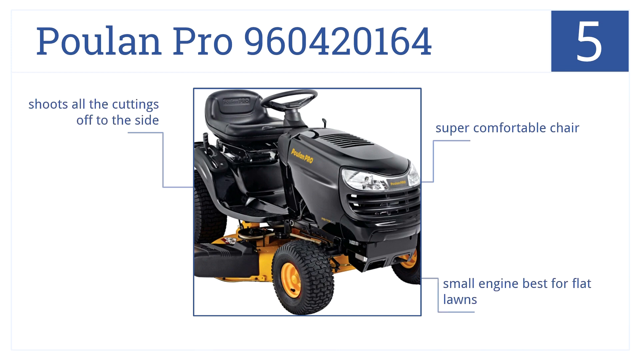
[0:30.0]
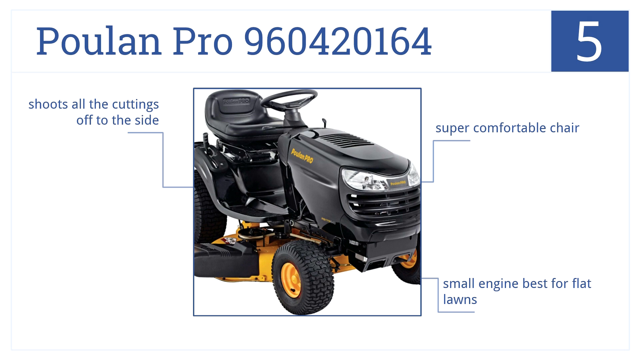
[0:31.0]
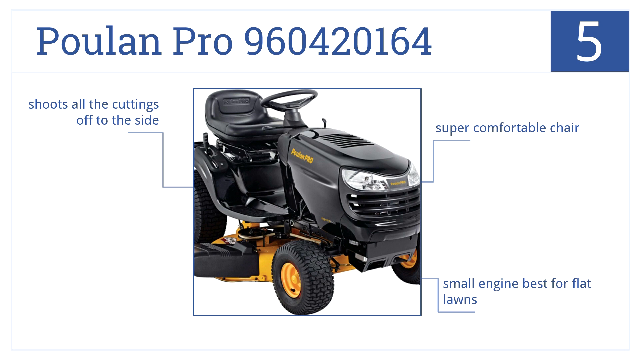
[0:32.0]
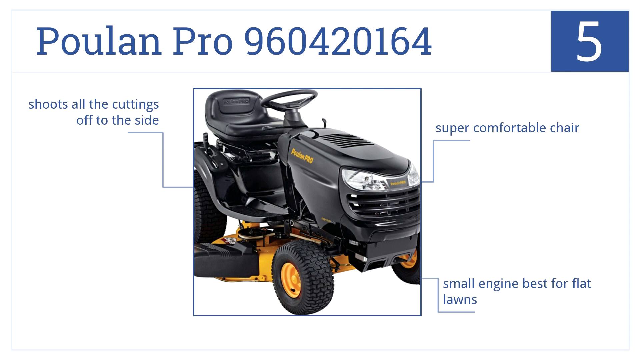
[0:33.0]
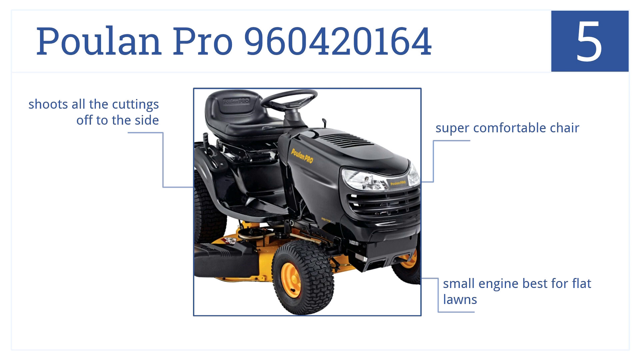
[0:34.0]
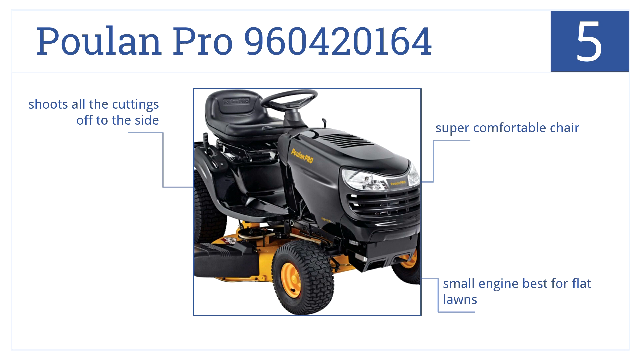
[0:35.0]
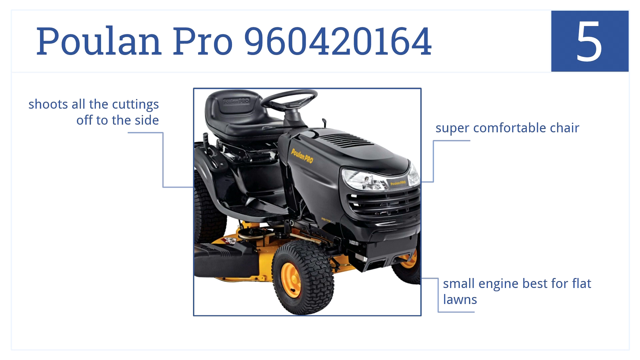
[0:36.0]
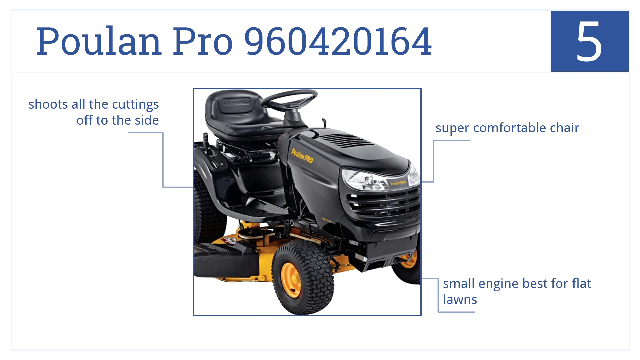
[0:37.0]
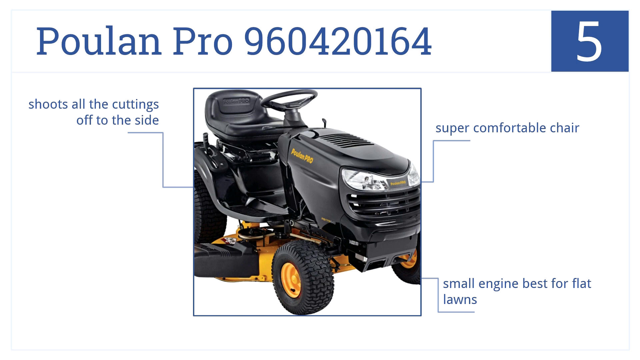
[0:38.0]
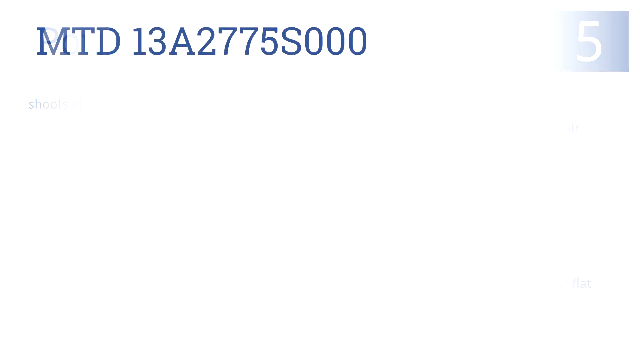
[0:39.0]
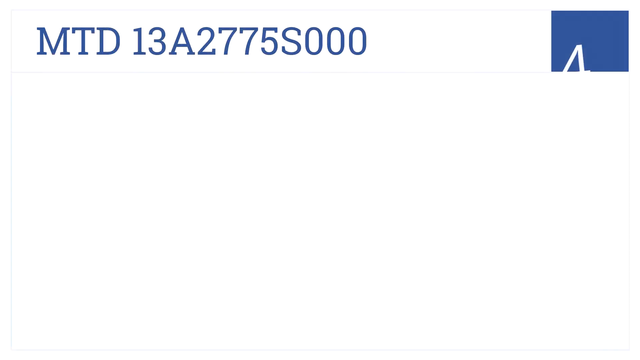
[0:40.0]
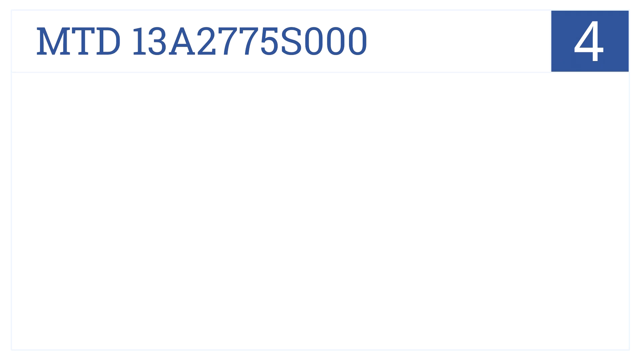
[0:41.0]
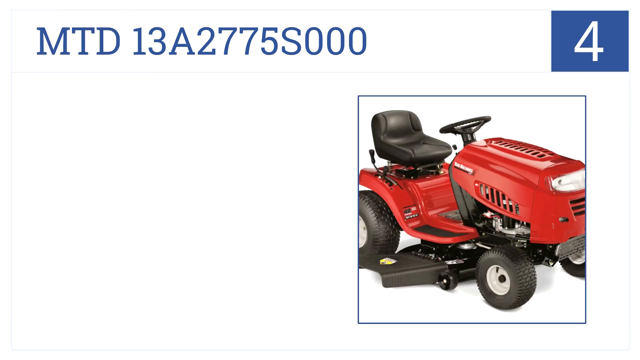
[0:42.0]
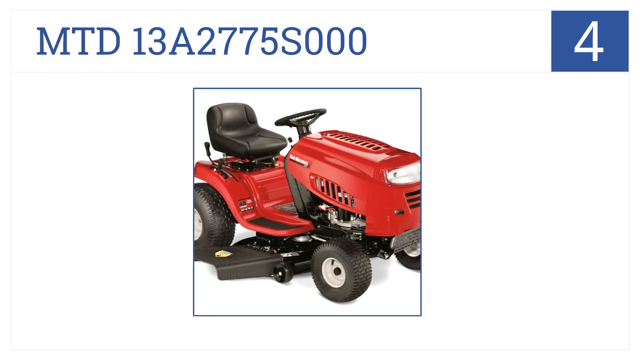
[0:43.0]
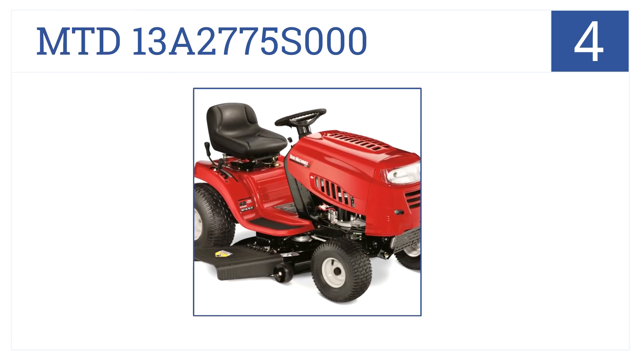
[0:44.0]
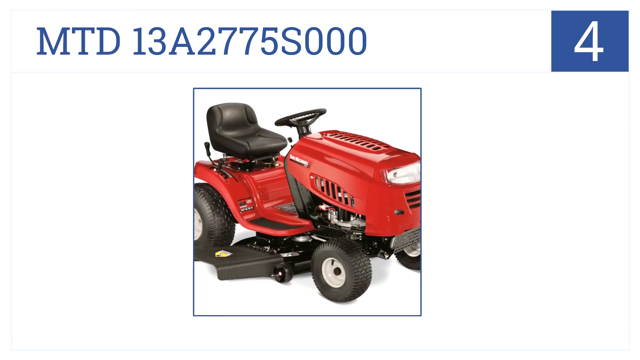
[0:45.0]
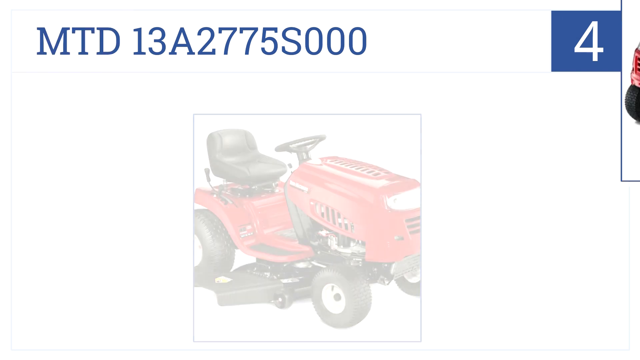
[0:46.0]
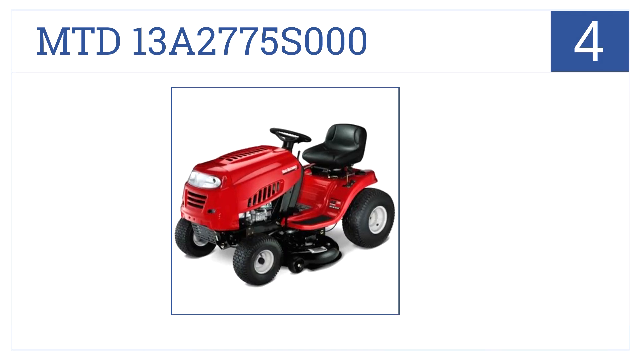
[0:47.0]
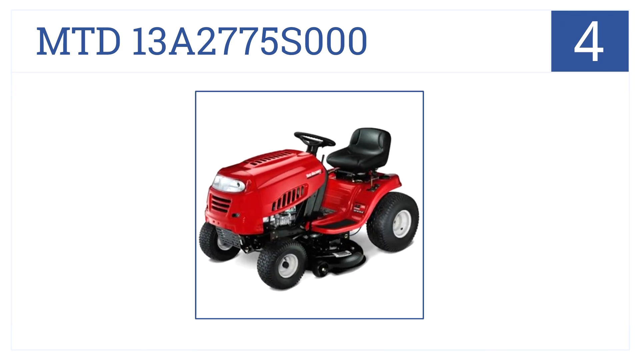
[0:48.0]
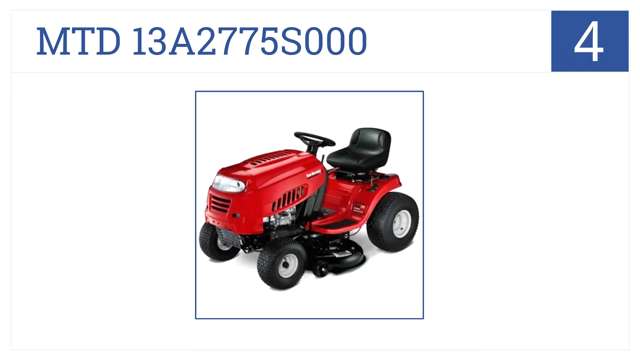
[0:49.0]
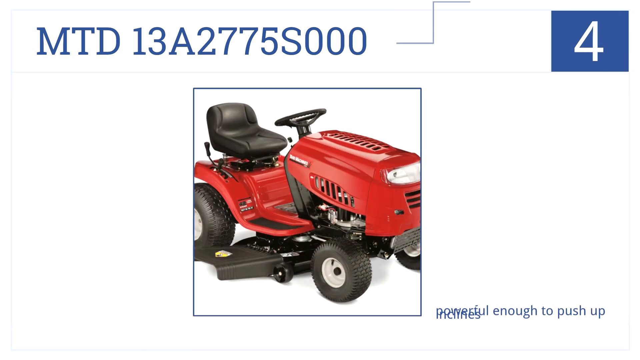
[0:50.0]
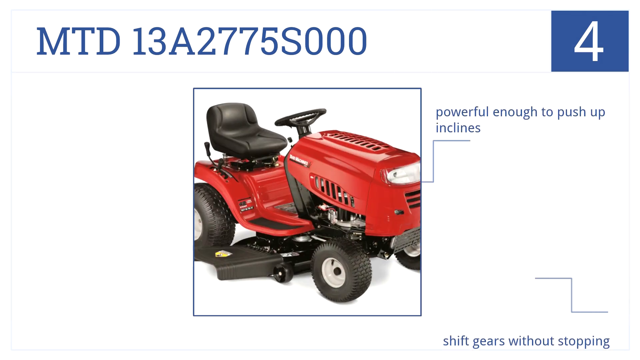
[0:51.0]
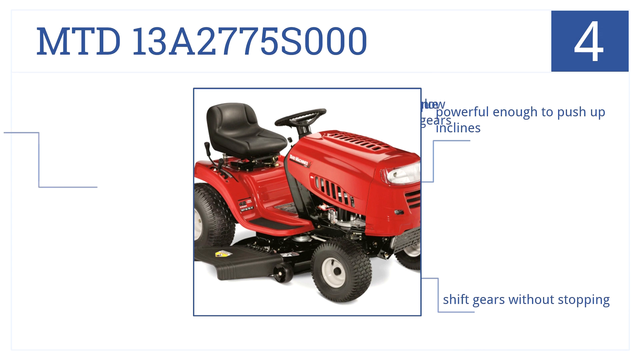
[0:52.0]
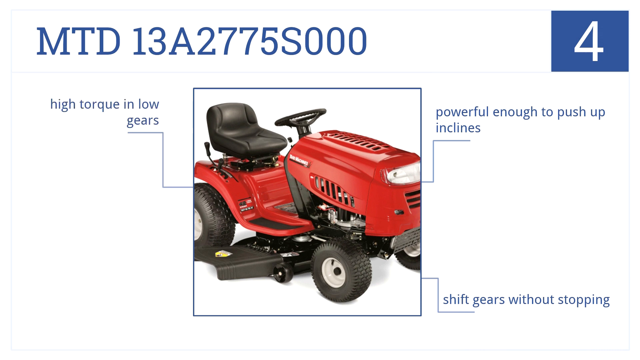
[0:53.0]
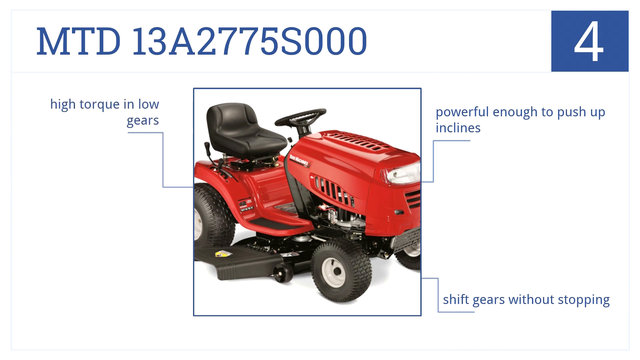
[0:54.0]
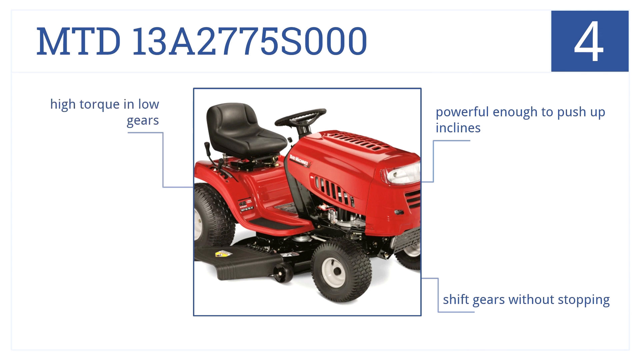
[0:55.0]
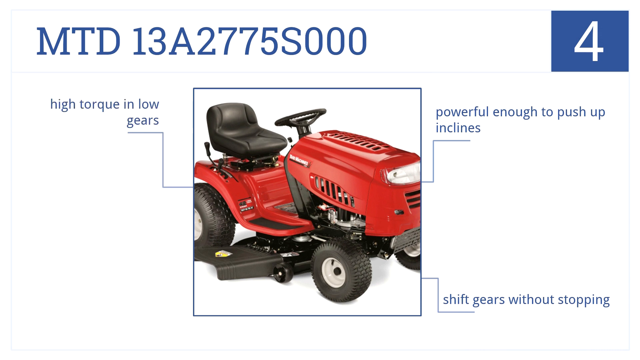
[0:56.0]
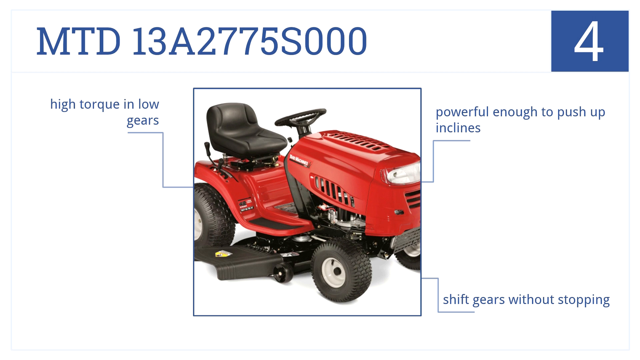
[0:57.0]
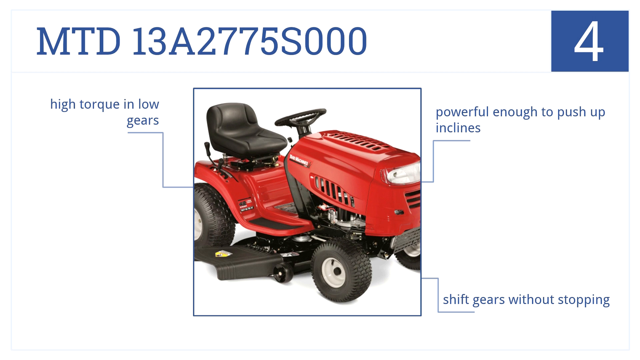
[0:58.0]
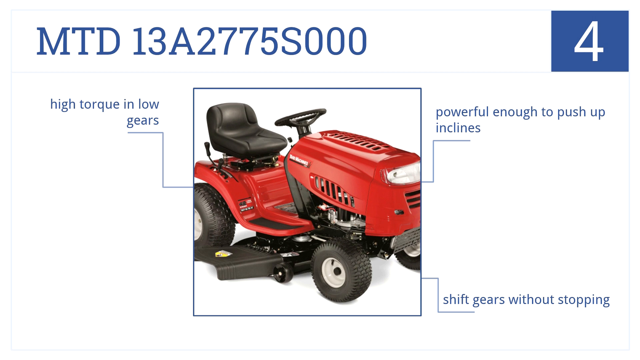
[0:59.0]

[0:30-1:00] The black tractor stays in the middle, with the 5 logo on the top right in white lettering on a blue background, and the blue text "Pulon Pro" at the top with numbers falling behind it. The tractor has an orange and black colorway, and arrows point to different sections with information about it. The tractor and its information fade away first, followed by the 5 at the top right. New blue text replaces the top of the screen, reading "MTD" followed by numbers and letters. A new blue logo appears on the top right with the number 4 in white on a blue background. A new tractor in an all-red color scheme with some black rotates from the top to the middle of the image. It fades down, and another view of the same tractor in the same colorway moves across the screen from the opposing side. The video then cuts back to the first image, and blue text appears around the tractor reading "high torque and low gears," "powerful enough to push up inclines," and "shift gears without stopping," with arrows pointing to different sections of the tractor.